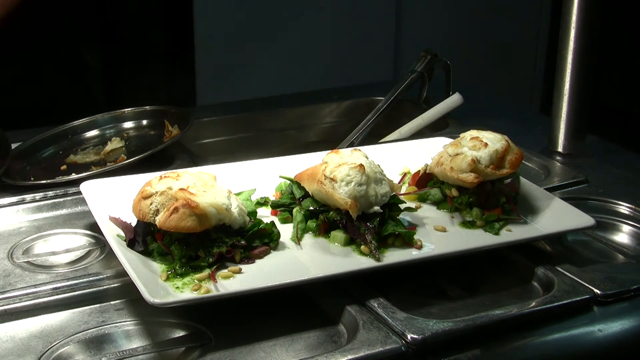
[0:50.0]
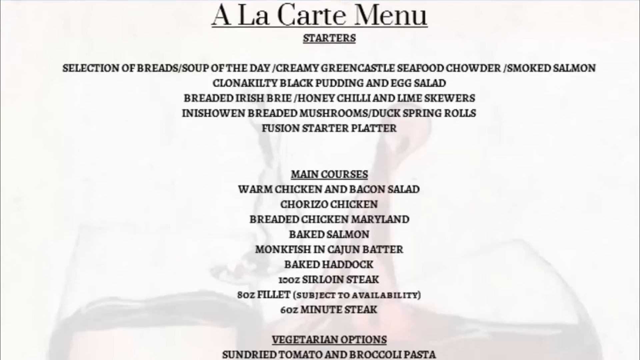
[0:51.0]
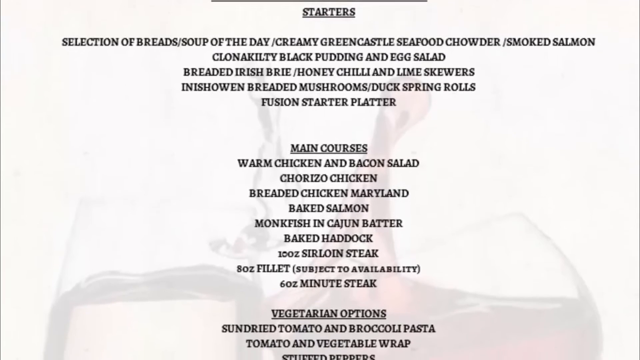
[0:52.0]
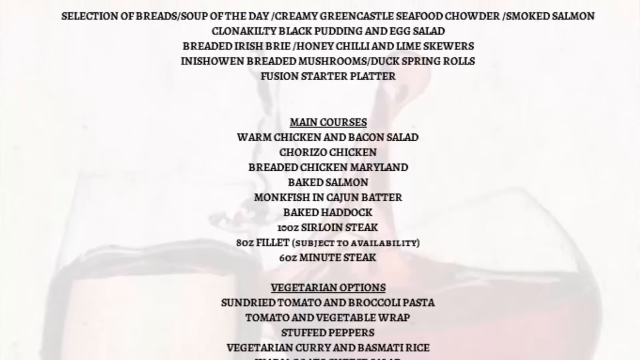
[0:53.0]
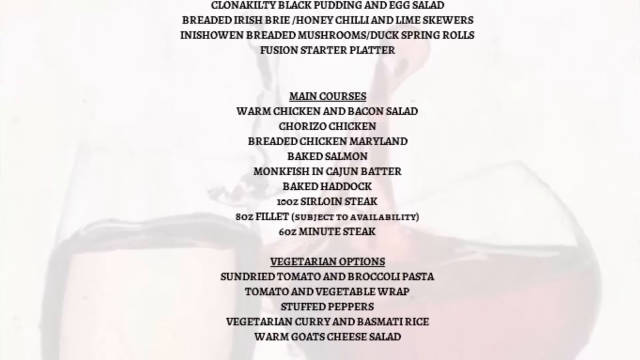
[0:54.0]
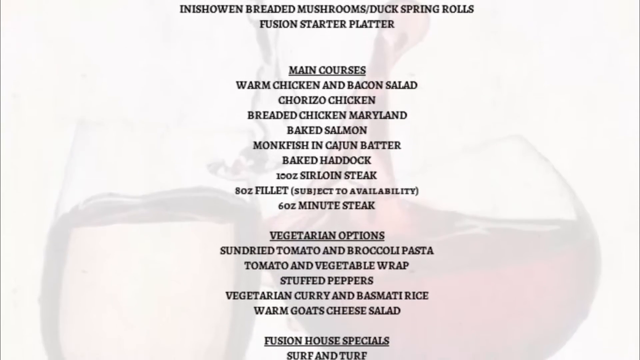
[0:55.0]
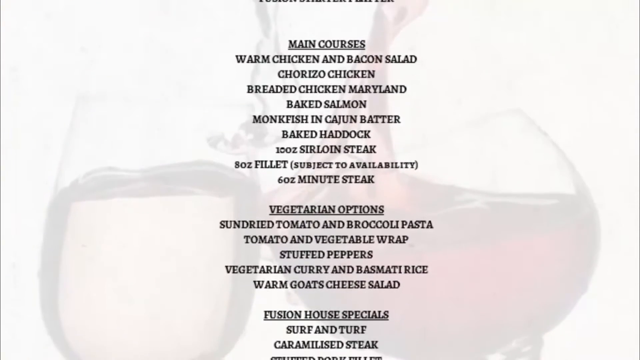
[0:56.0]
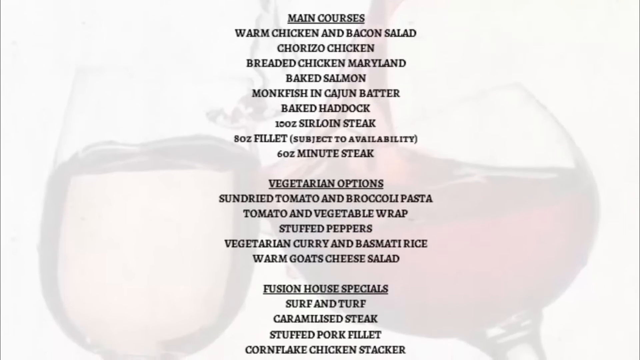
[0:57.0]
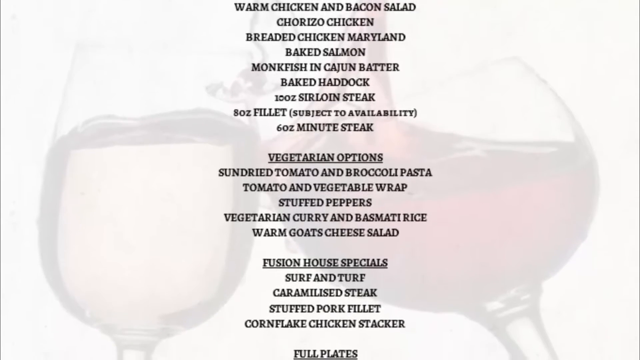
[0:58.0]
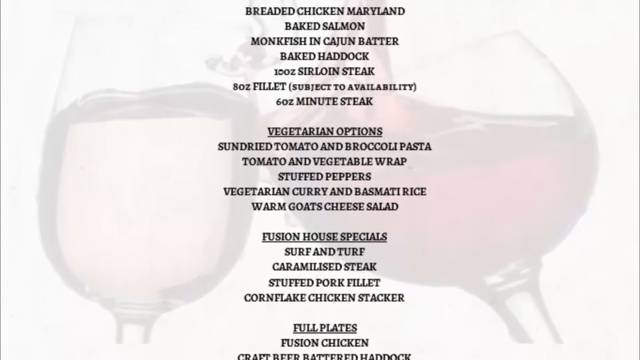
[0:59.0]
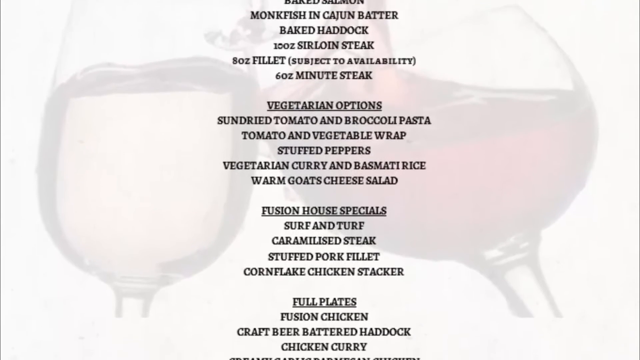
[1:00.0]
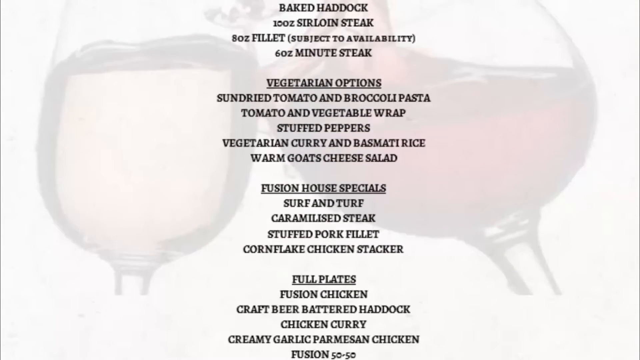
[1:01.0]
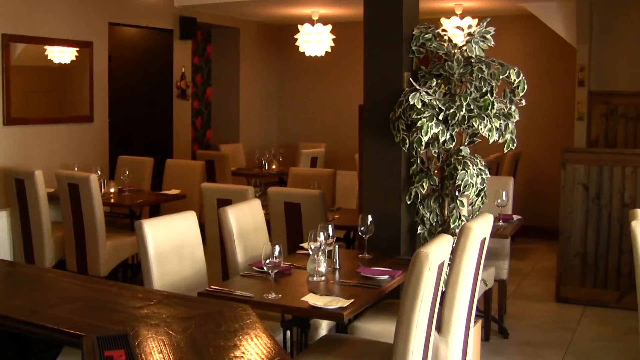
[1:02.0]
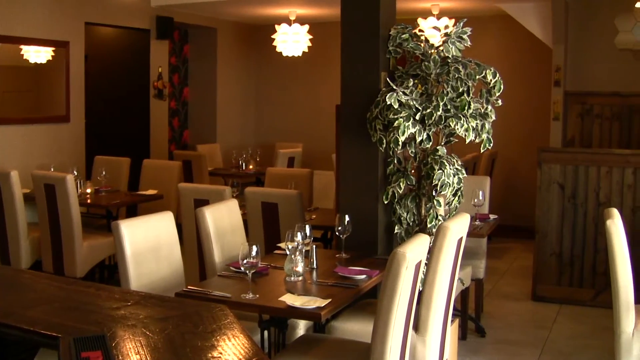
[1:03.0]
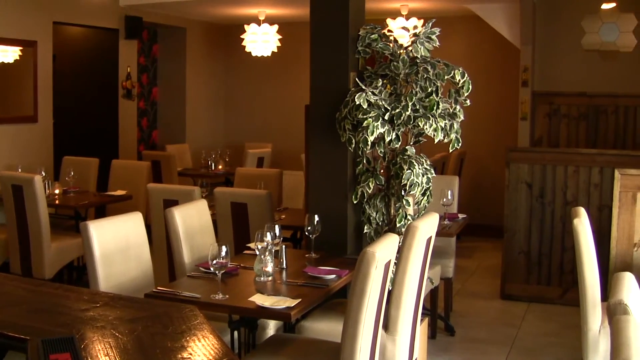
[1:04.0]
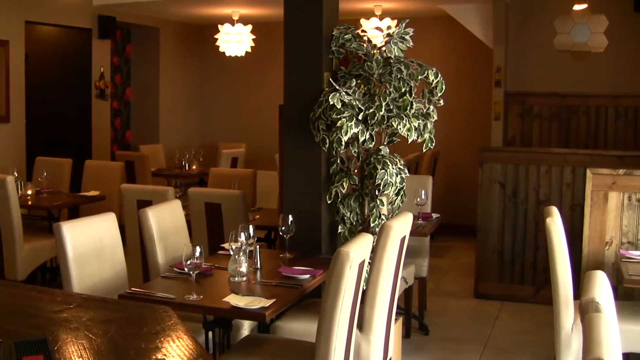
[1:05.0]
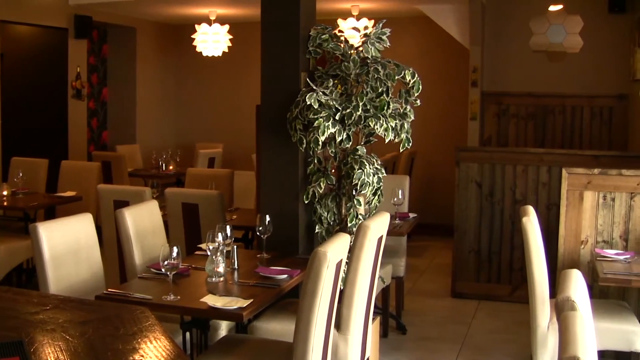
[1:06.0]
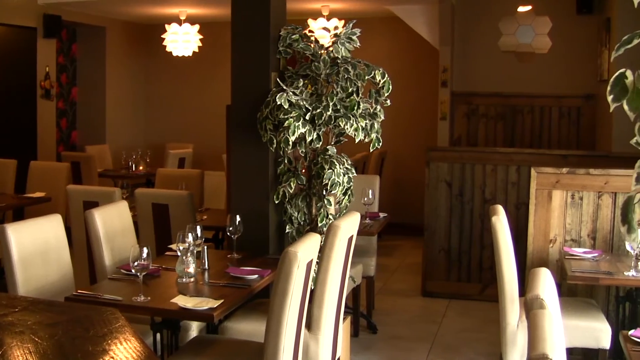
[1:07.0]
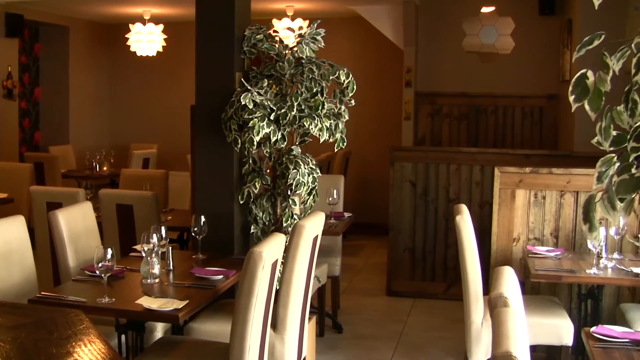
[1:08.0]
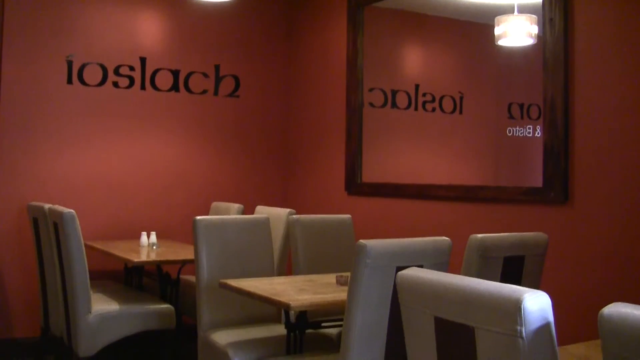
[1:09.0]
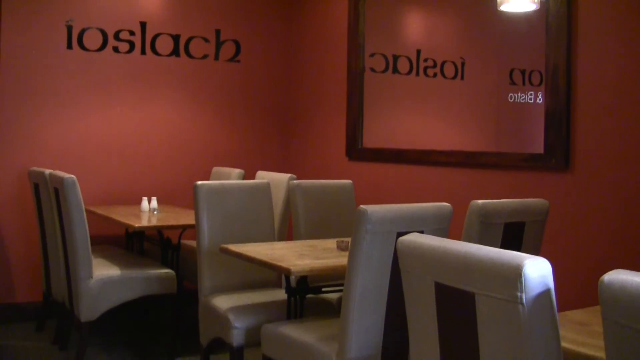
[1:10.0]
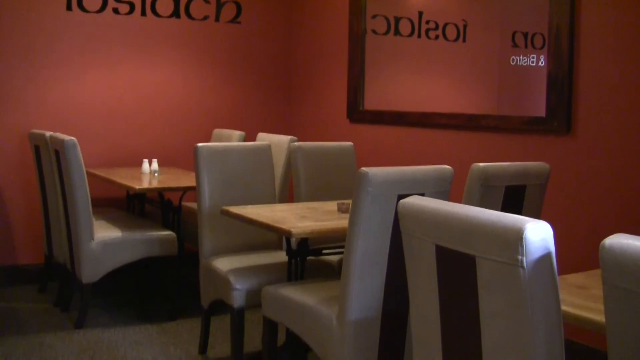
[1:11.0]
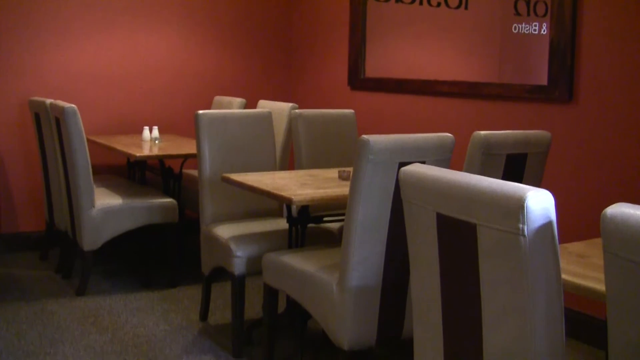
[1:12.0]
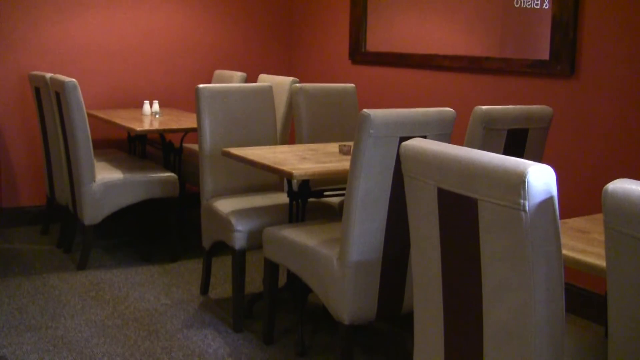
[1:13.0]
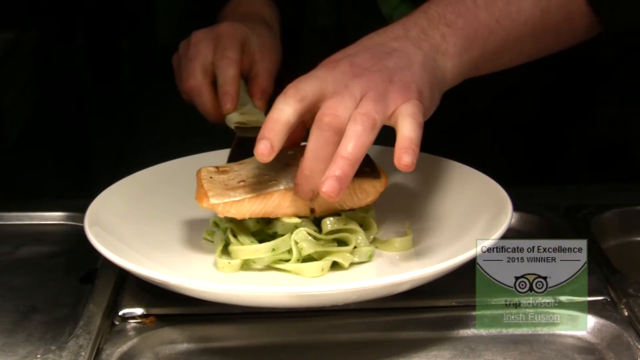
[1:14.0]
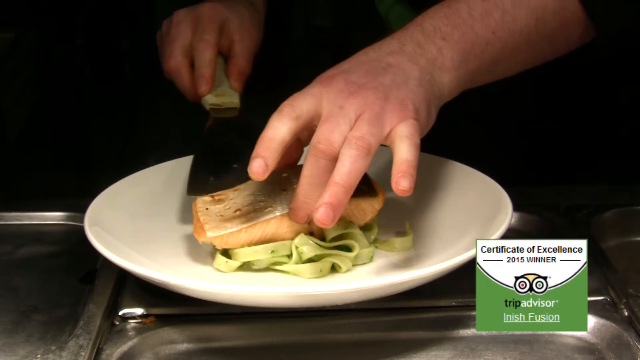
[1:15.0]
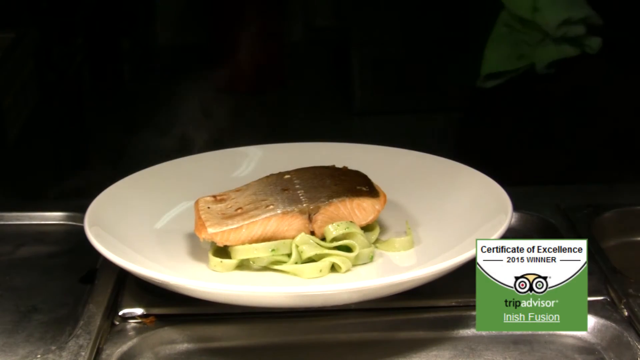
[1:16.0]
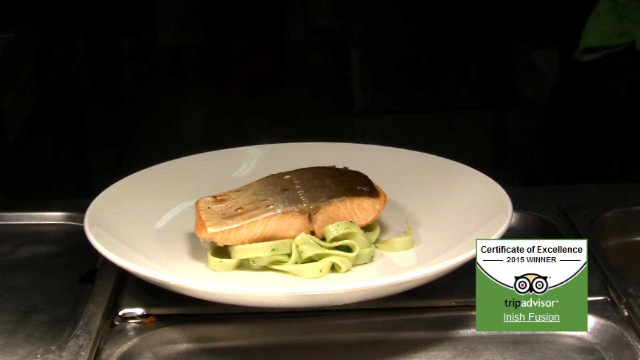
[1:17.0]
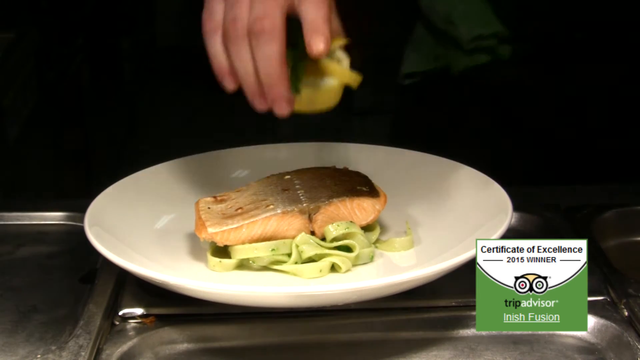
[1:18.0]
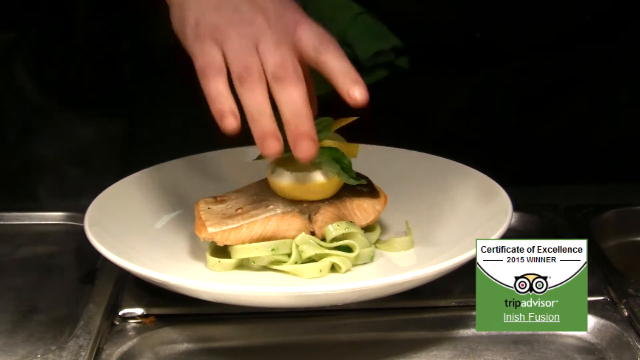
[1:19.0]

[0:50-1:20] The camera pans across an a la carte menu with the categories starters, main courses, vegetable options, fusion house specials, and full plates. There are a lot of options, about 8 to 10 per category, and a subtle graphic of wine glasses is in the background of the menu. The video cuts to a pan of a basic beige dining room with beige chairs, wood tables, and hanging lights from the ceiling; it seems kind of intimate. There is a word on the wall, probably the name of the restaurant, though it is hard to tell what it says. The tables are set with very red napkins, wine glasses, and white plates. Next, a piece of salmon is plated on some pasta with lemon on top. In the last scene, a waiter with his hands full serves plates around the restaurant, which looks very full.